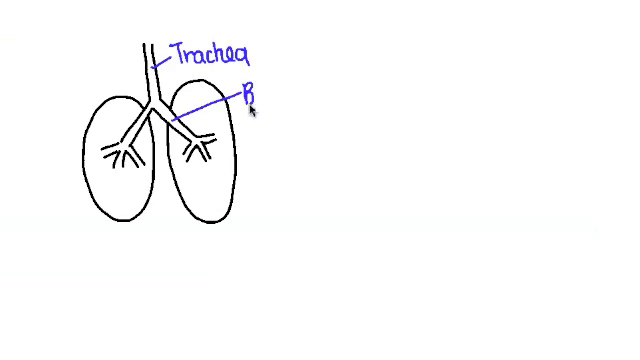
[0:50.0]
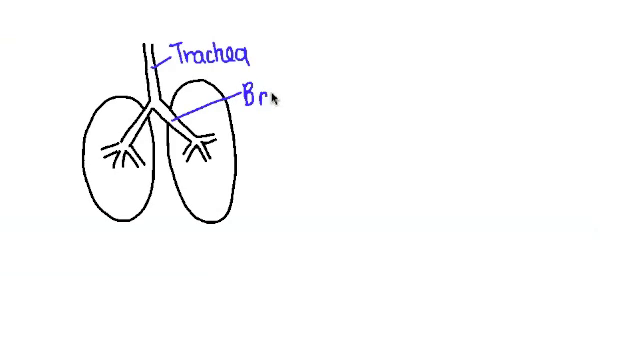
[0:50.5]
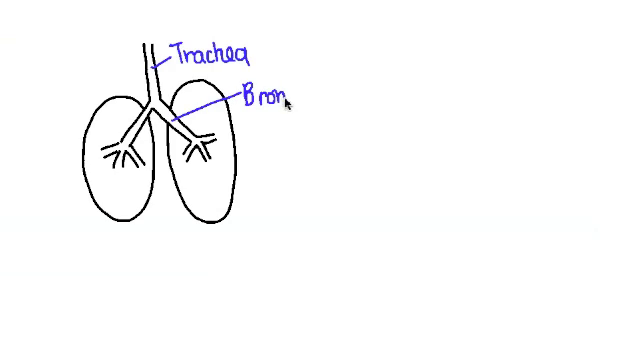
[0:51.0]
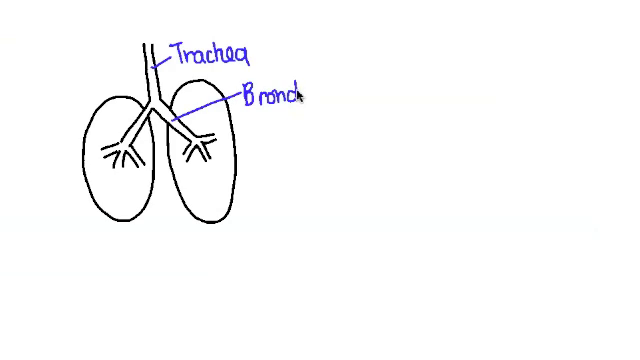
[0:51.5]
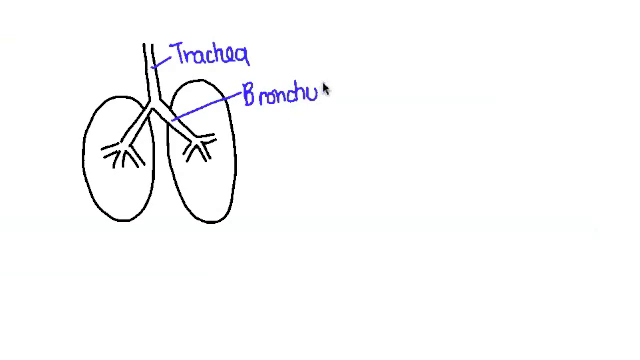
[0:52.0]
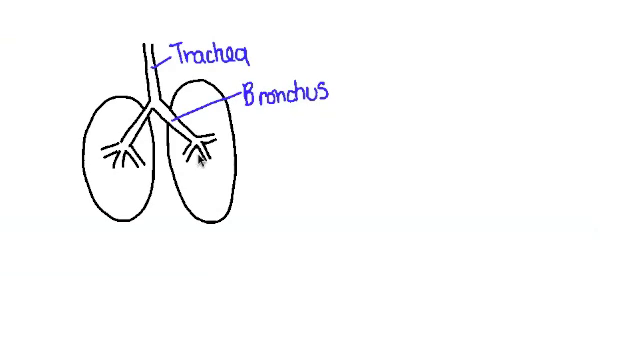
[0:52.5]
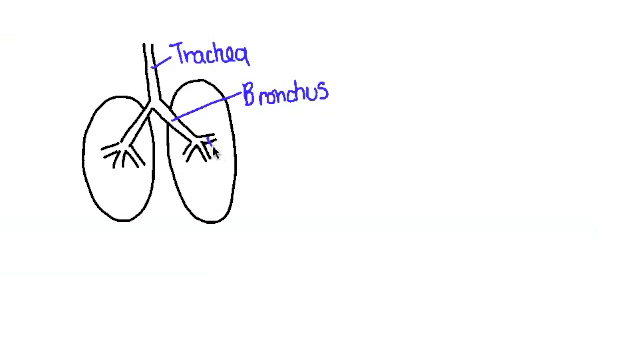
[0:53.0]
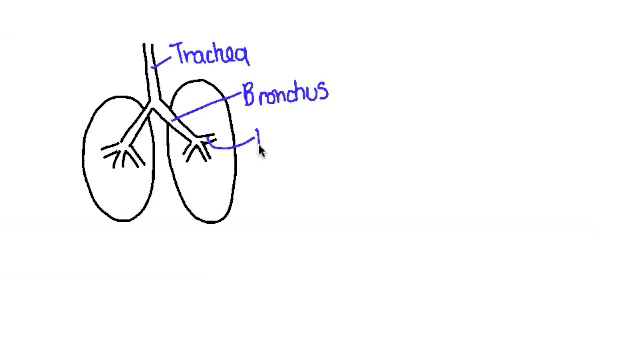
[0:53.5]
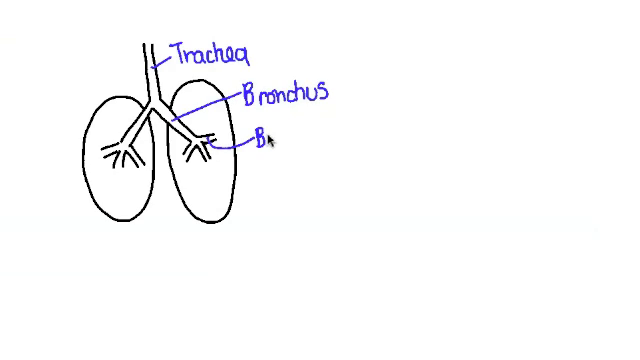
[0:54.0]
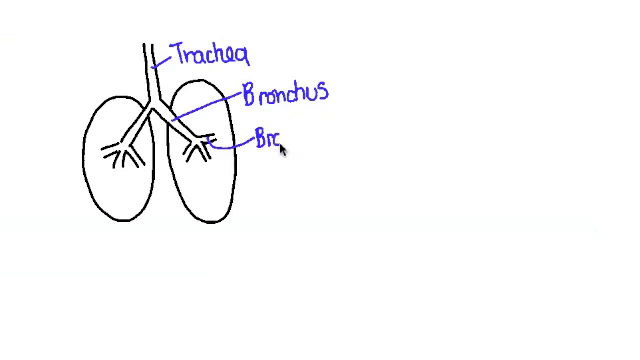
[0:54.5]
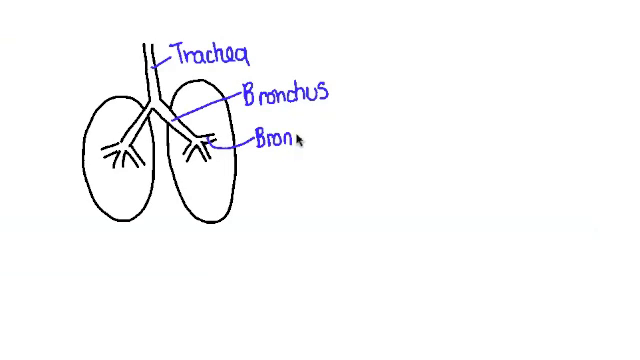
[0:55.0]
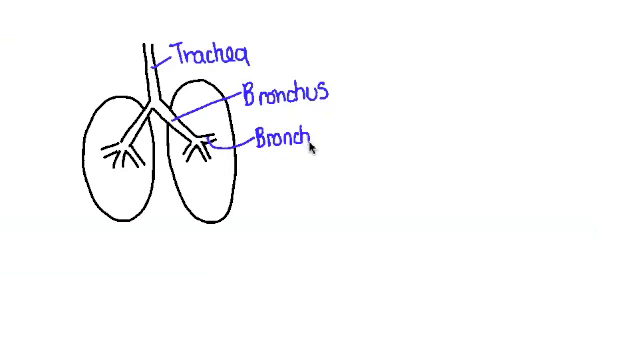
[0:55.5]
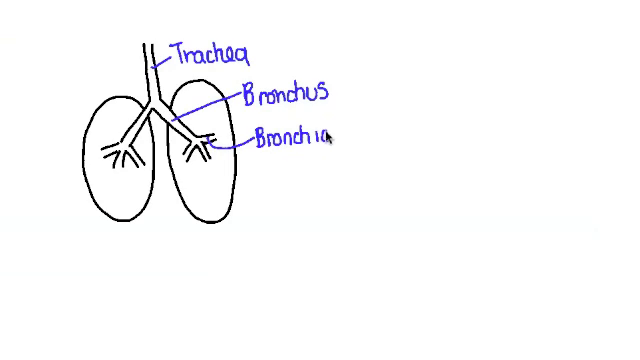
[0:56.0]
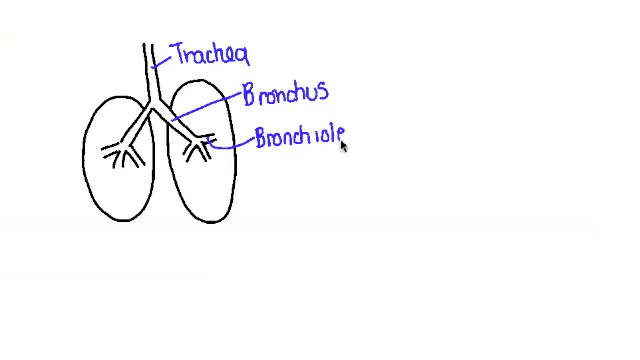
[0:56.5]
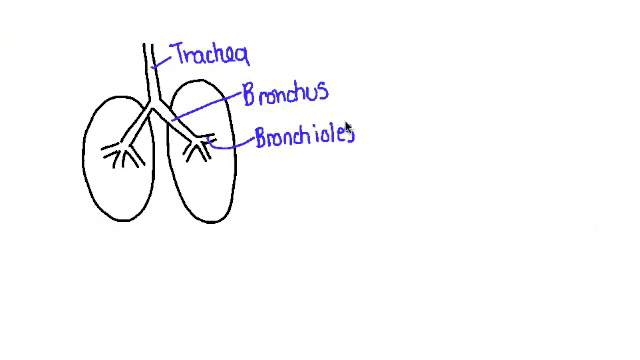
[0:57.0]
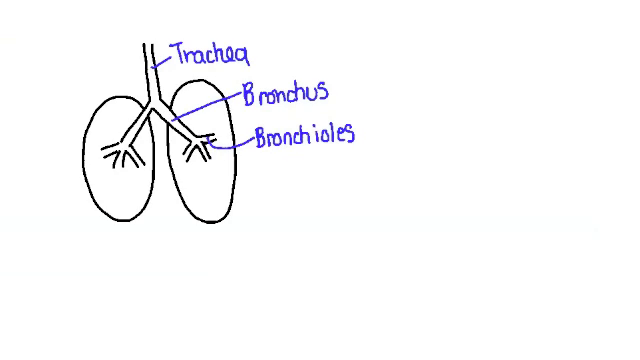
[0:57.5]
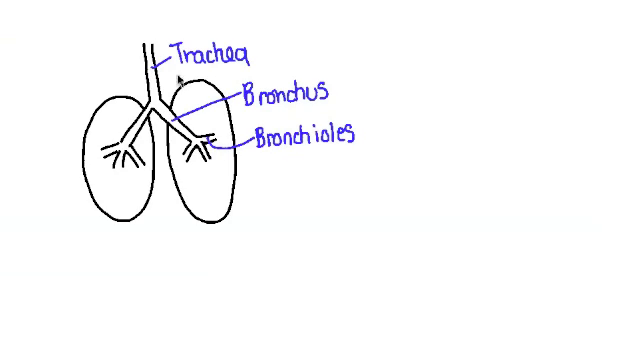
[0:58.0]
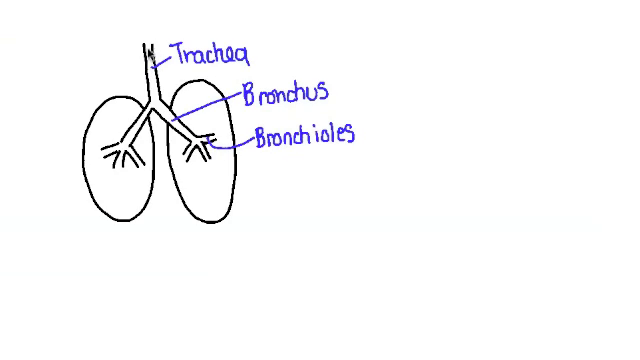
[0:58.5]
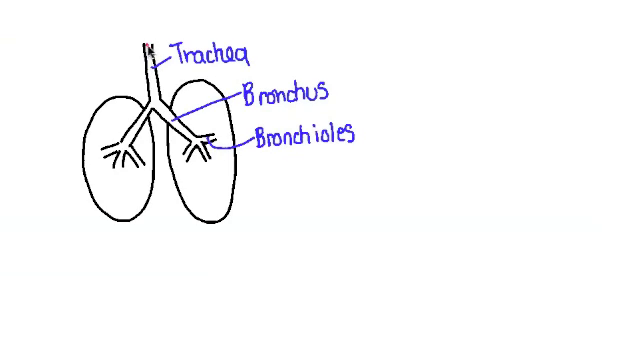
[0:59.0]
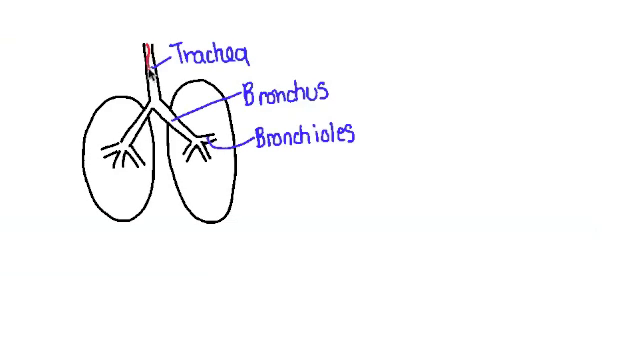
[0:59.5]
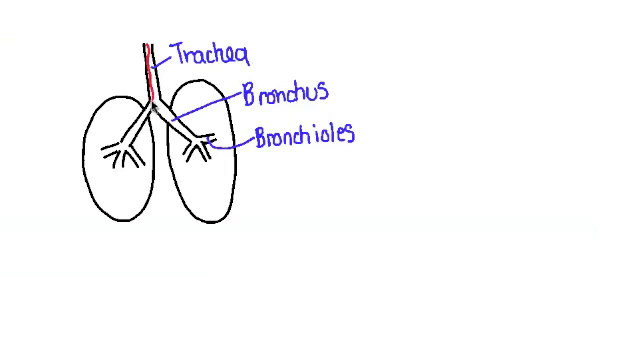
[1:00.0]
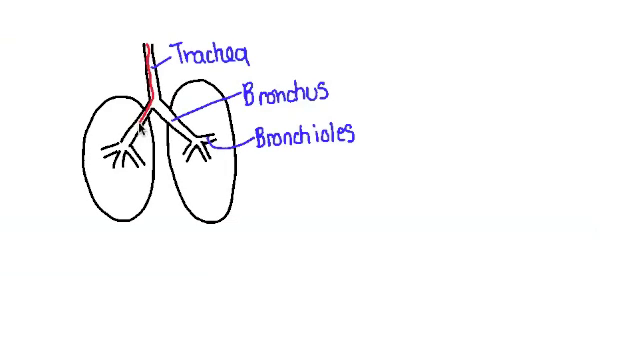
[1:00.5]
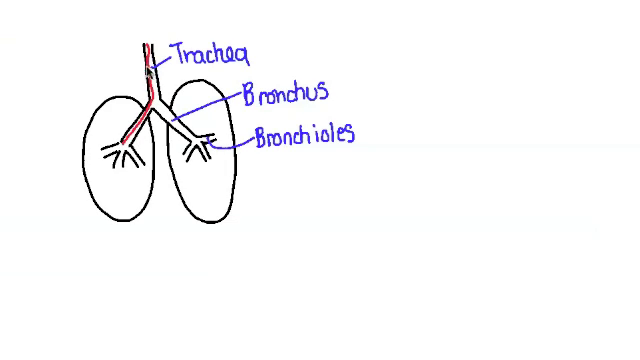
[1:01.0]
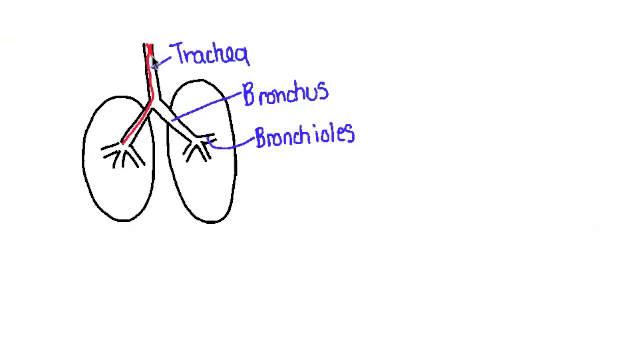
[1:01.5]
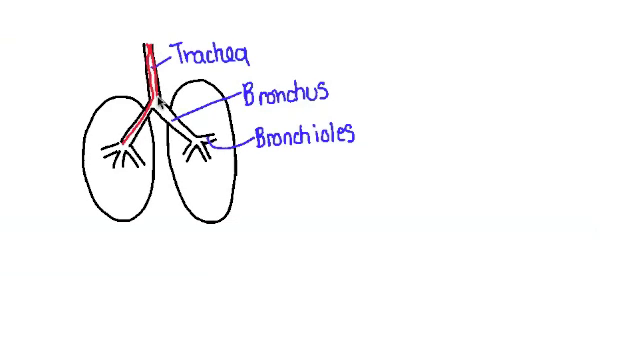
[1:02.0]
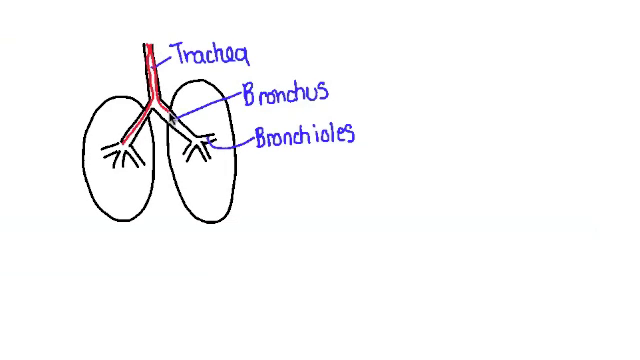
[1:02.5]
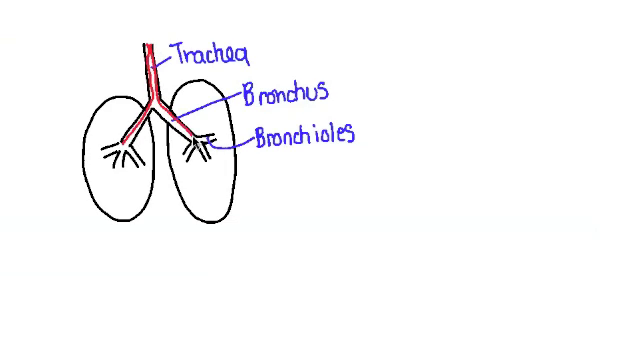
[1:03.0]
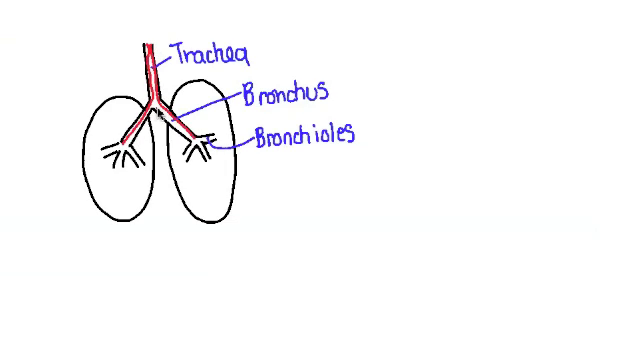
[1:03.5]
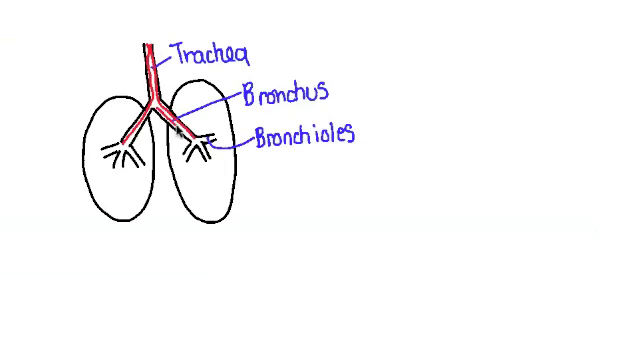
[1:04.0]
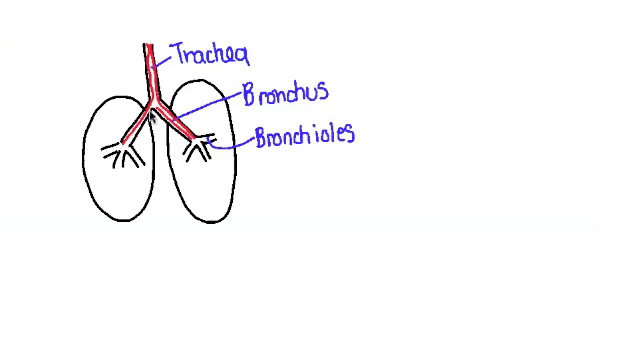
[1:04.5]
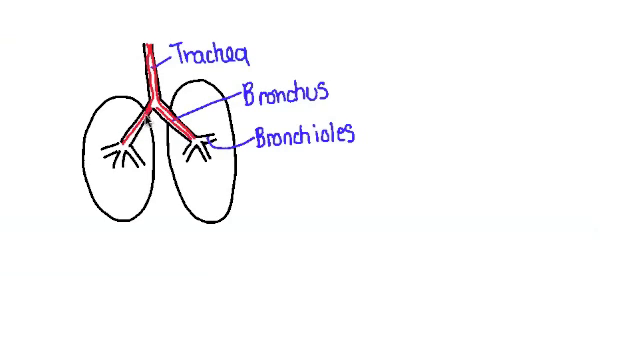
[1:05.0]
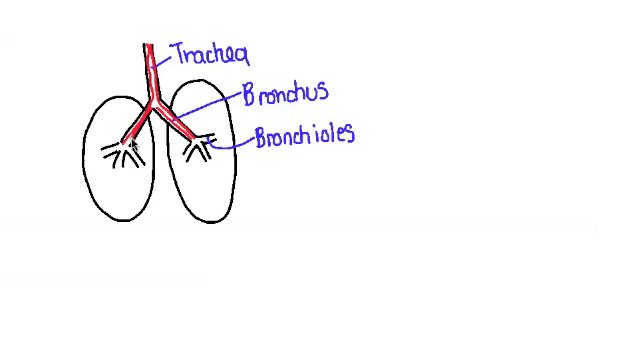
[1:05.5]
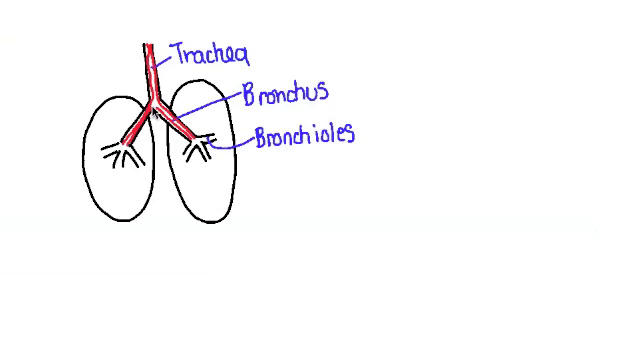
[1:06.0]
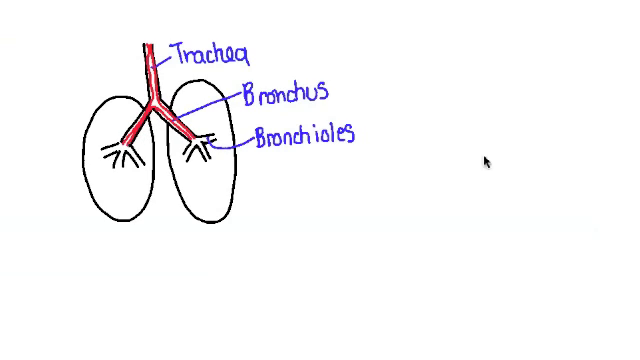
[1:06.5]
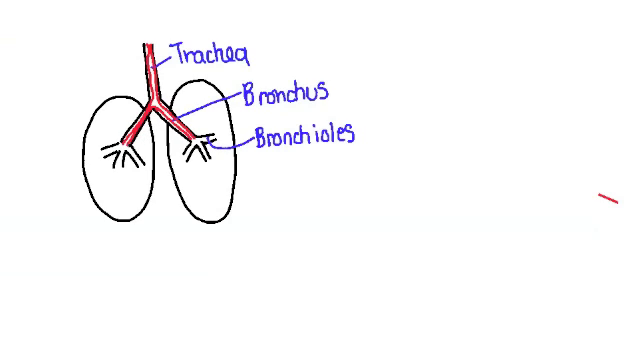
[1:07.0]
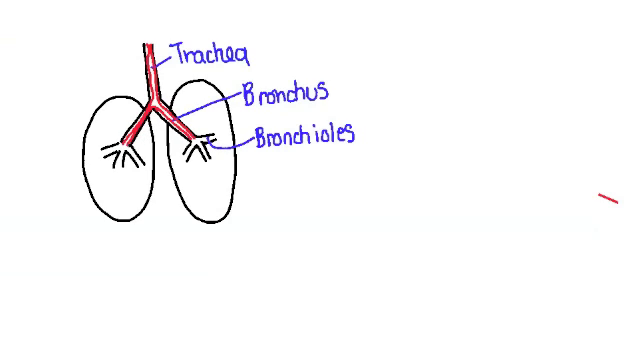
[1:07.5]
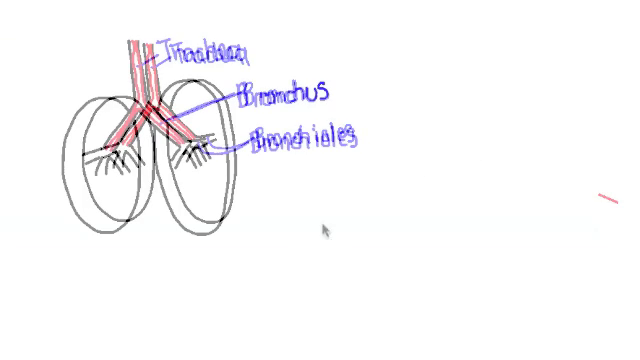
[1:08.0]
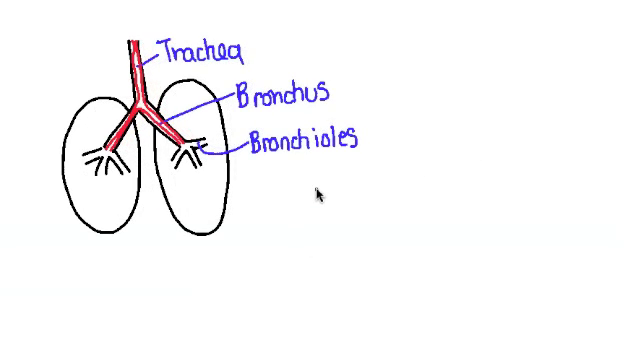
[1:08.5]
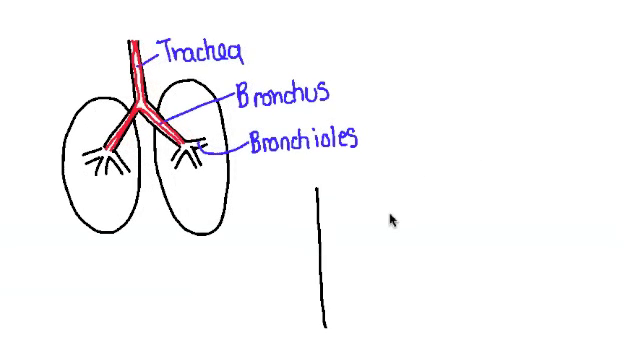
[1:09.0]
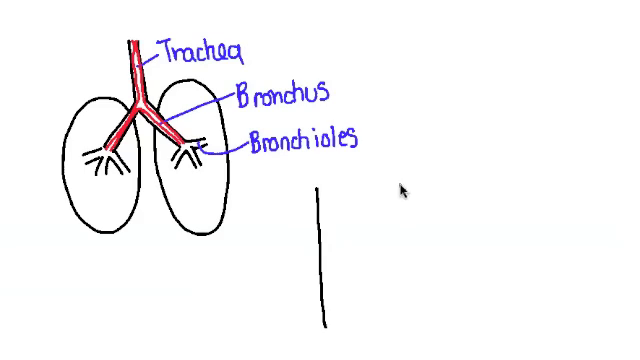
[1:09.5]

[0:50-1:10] A purple line is drawn from the portion of the lung that extends off the trachea, and the label "bronchus" is applied to it. Another curved line is drawn below to the section of the lung that extends off the bronchus, labeled "bronchioles." All of this text is purple. Red lines are then drawn from the top of the trachea down to the bronchioles on both sides of the lungs, seemingly indicating either airflow or blood flow. The video transitions slightly before two vertical parallel lines are drawn in the bottom center of the screen. The rest of the background remains white, sort of like a whiteboard.